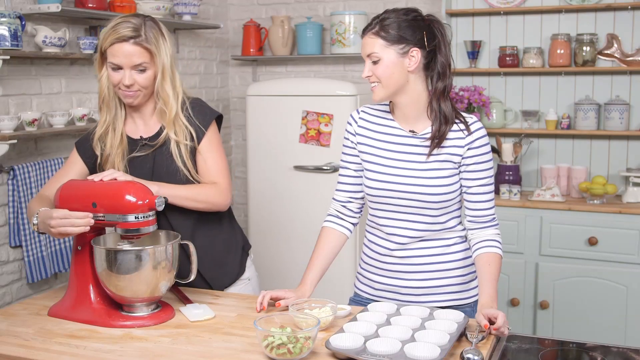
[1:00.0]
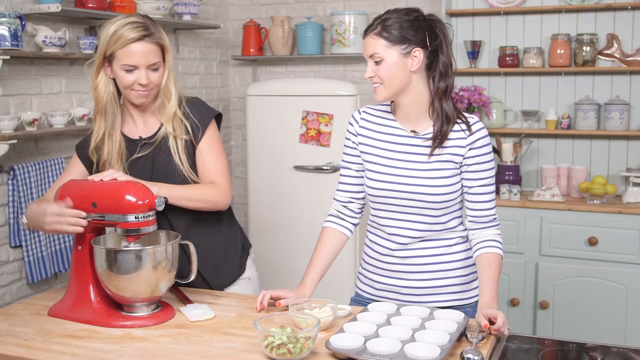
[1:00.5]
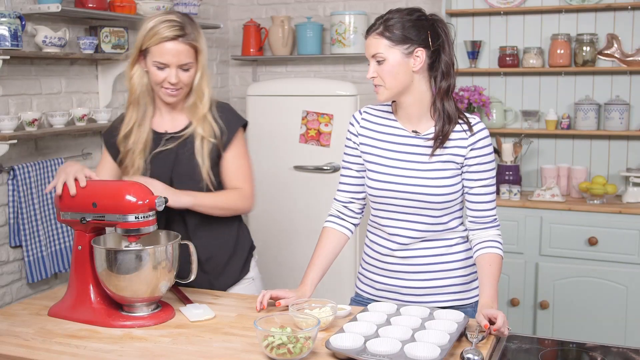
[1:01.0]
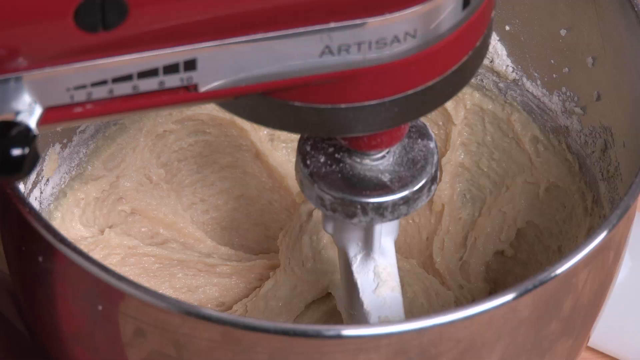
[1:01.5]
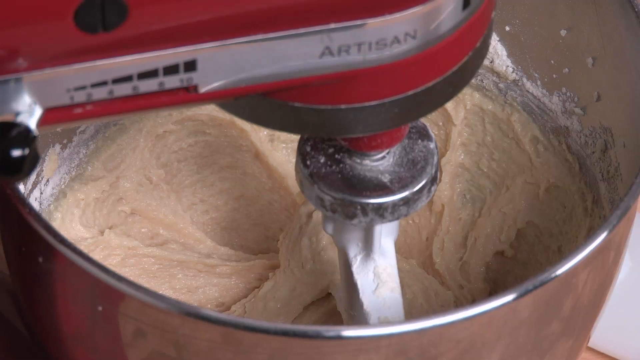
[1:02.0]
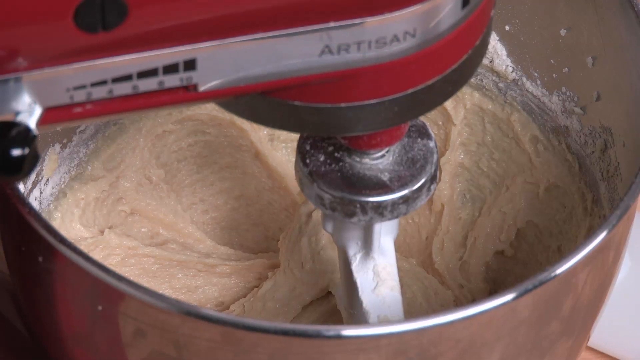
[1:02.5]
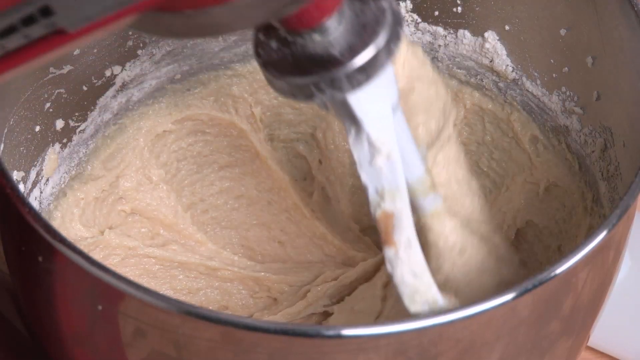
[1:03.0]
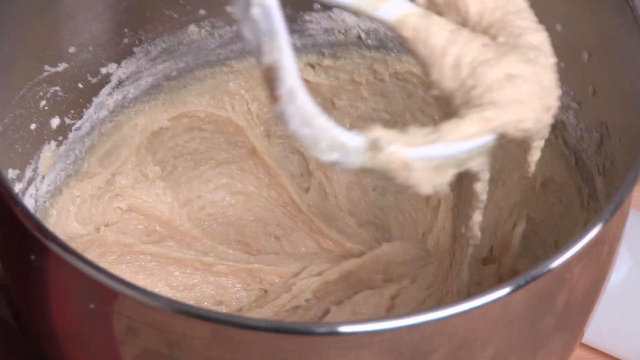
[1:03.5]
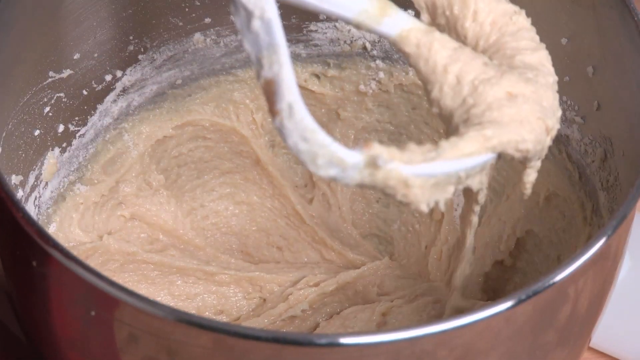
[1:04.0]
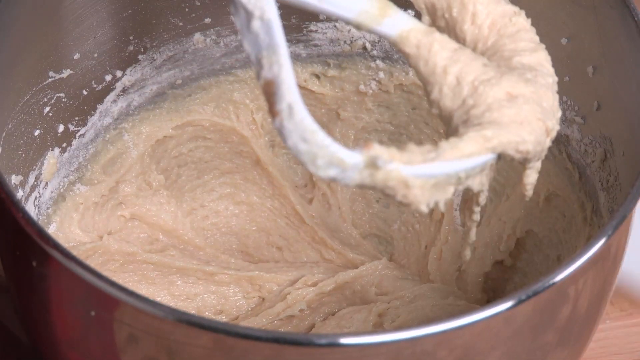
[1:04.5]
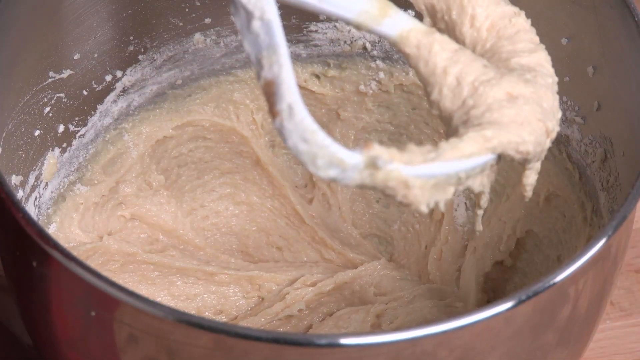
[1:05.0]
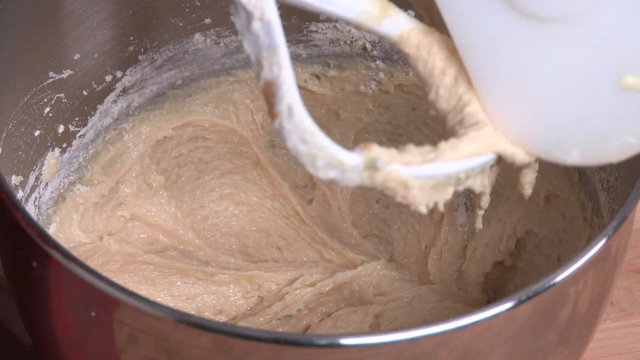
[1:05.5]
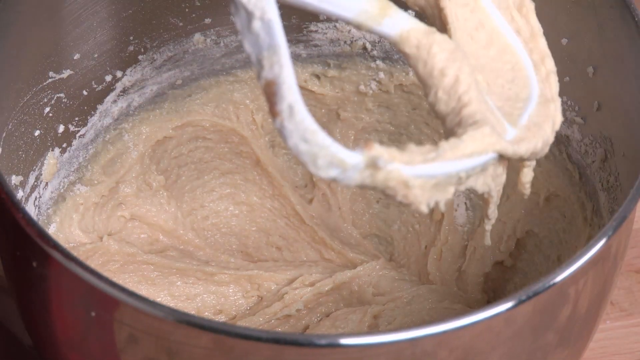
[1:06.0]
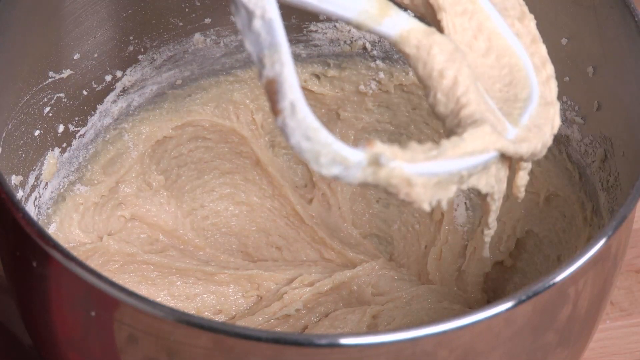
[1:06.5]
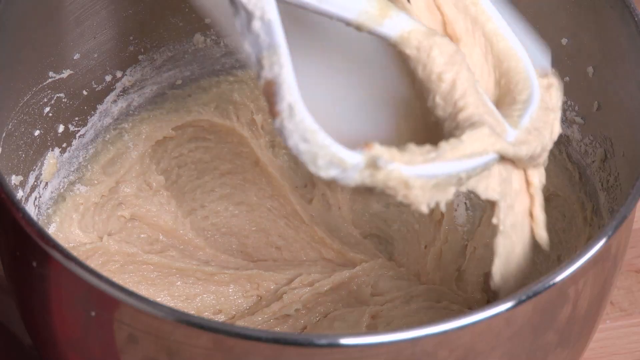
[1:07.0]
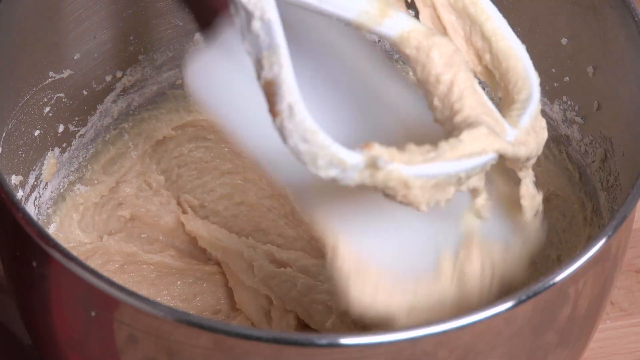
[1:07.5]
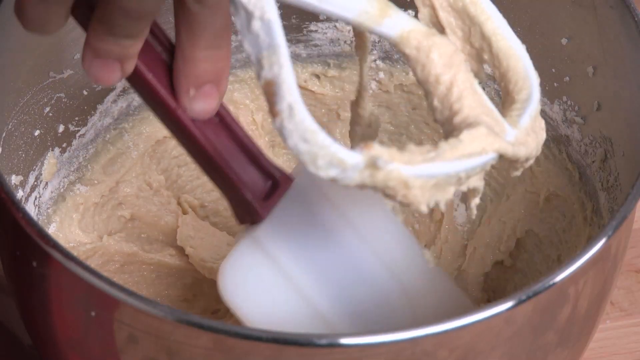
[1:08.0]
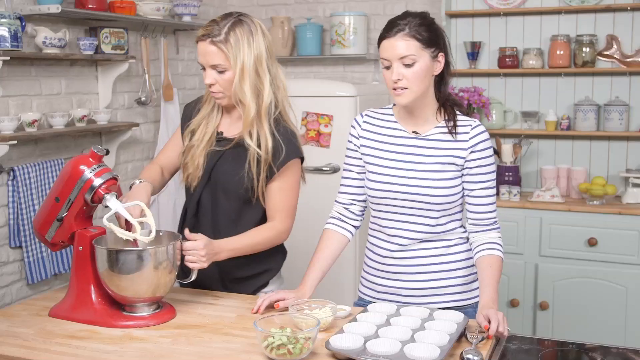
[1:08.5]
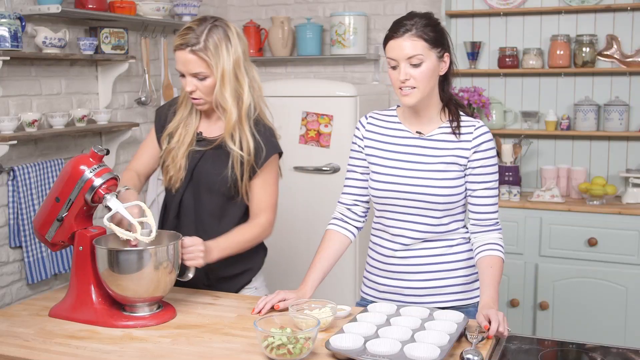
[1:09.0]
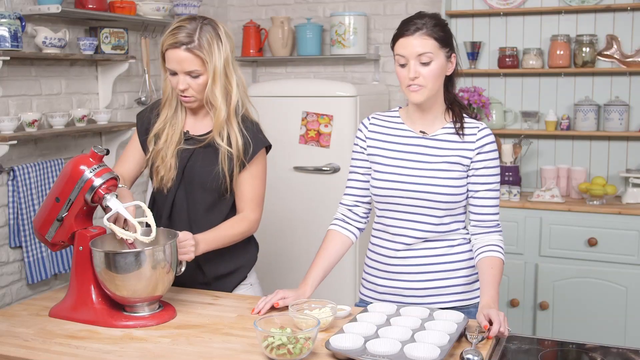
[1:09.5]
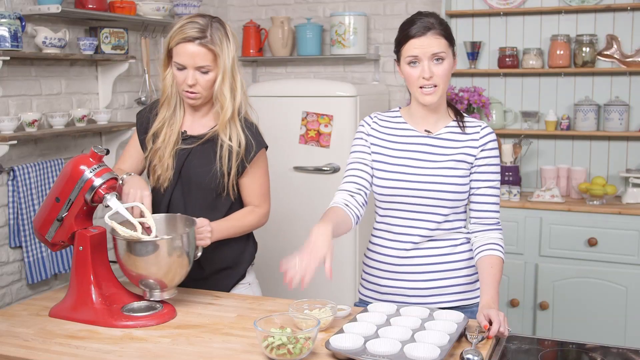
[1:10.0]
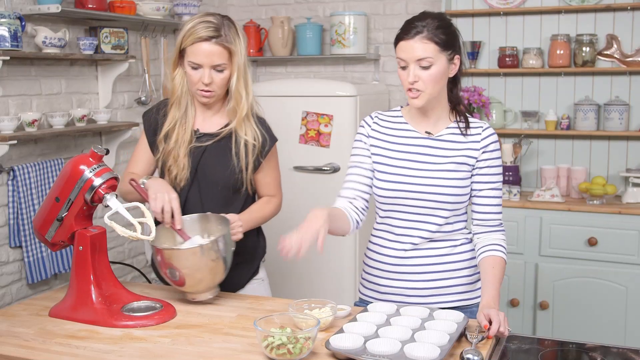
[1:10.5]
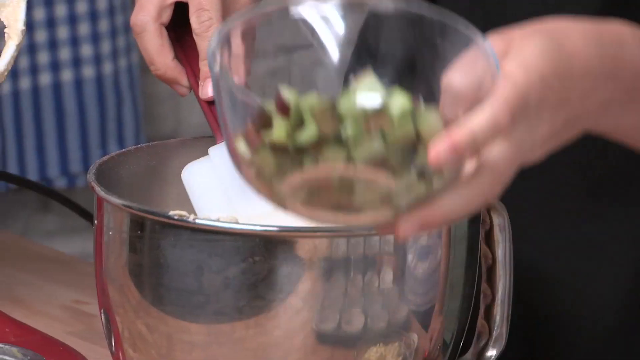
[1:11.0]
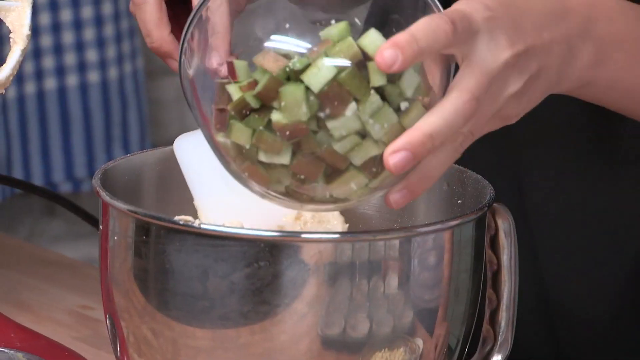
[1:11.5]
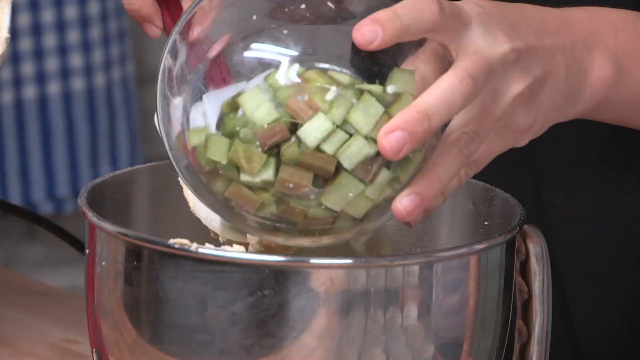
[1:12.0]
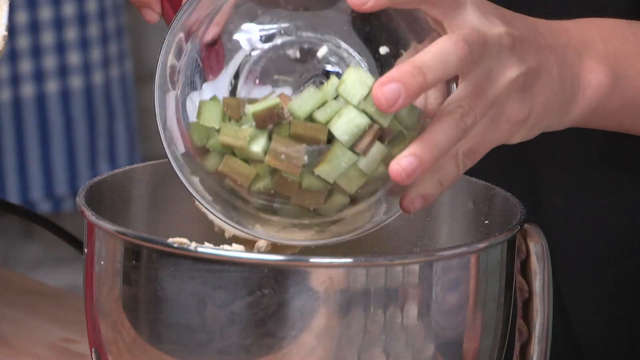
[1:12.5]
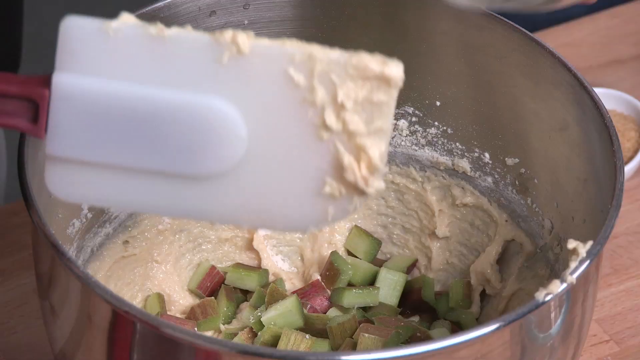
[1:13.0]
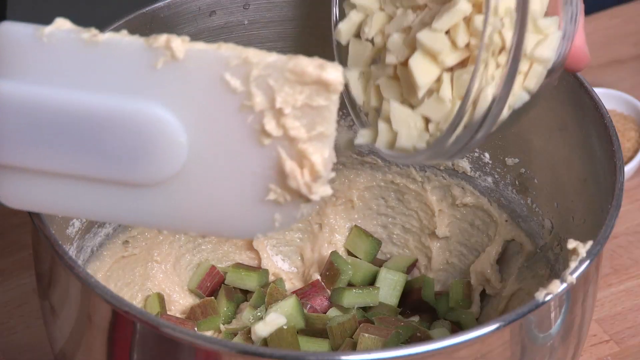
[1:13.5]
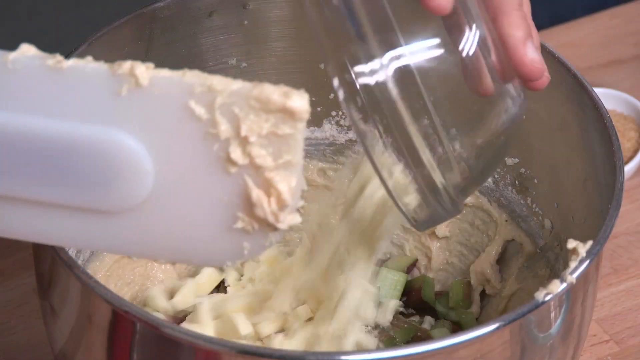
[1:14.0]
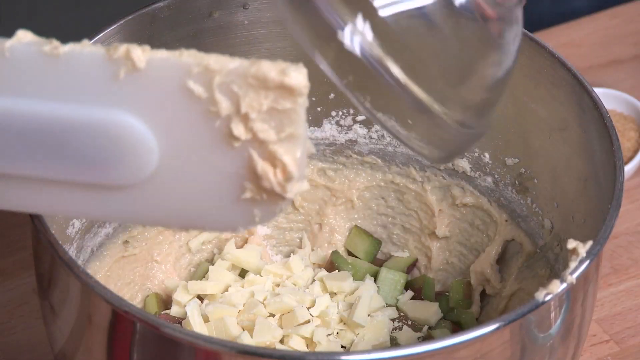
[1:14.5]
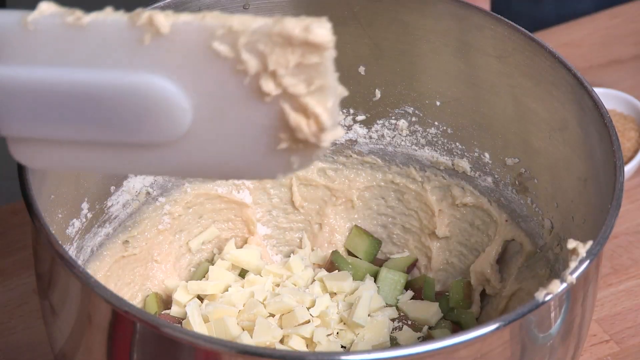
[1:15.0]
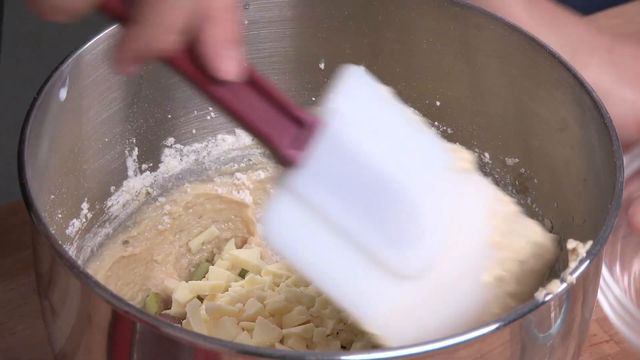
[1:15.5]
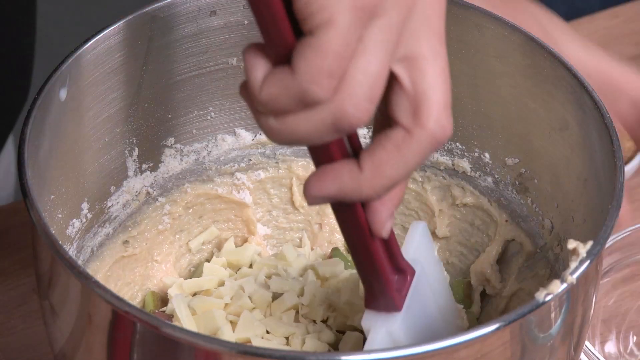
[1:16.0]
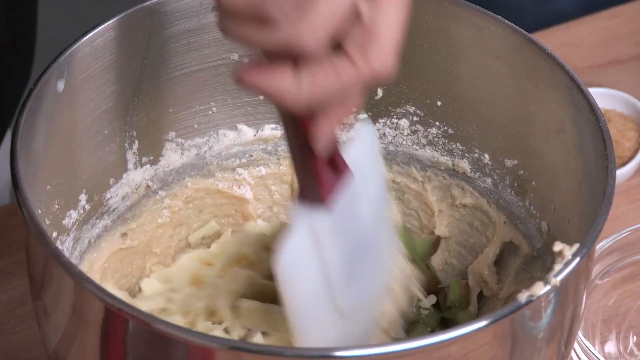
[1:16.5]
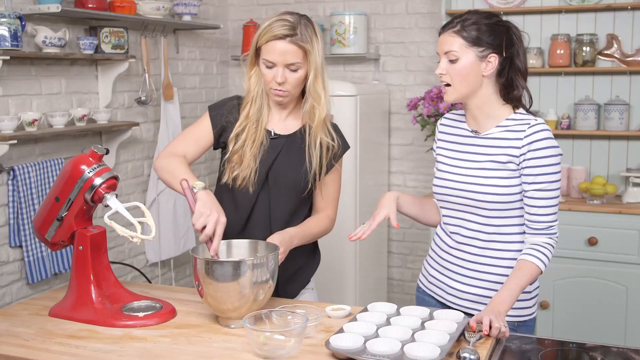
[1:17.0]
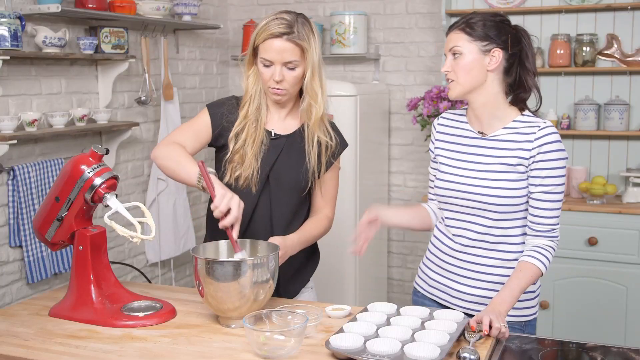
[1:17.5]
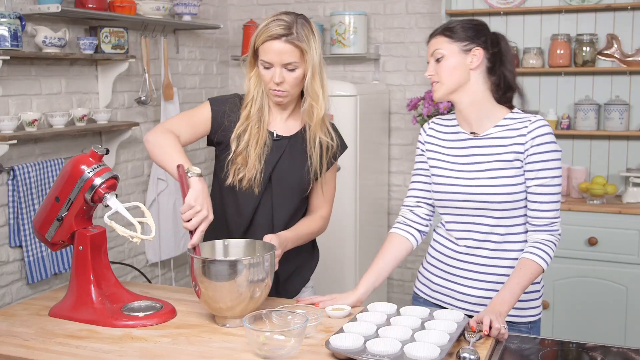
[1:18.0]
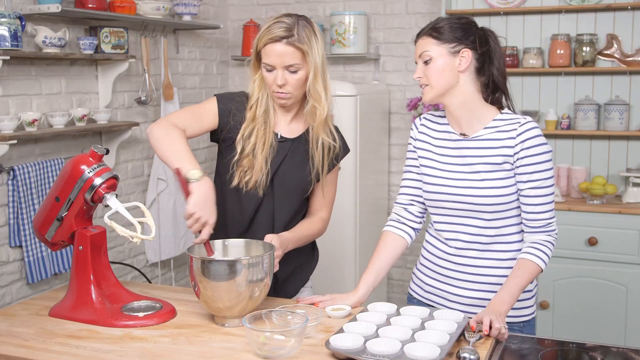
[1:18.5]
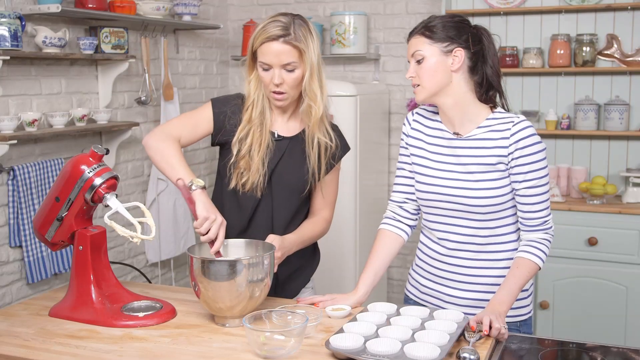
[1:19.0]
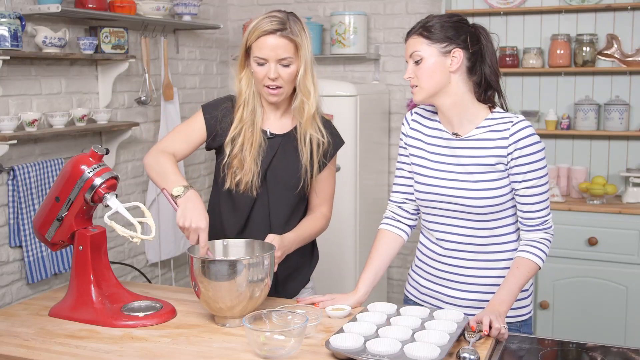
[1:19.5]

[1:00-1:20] They continue to mix the ingredients together until they come out to a smooth consistency. The lady on the right adds more ingredients; what she adds is unclear, but it seems to be some sort of fruit. The mixer is red. They are in a kitchen with lots of cooking ingredients all around. The lady on the left seems to get the baking pans ready.